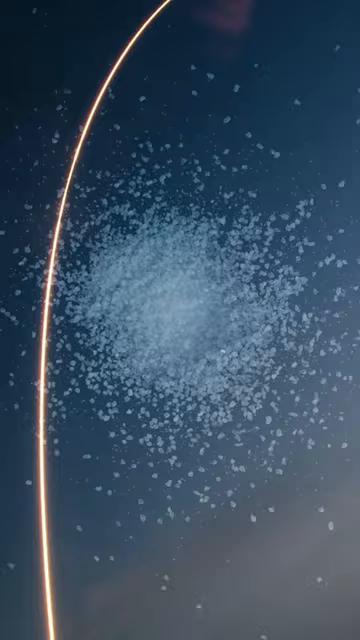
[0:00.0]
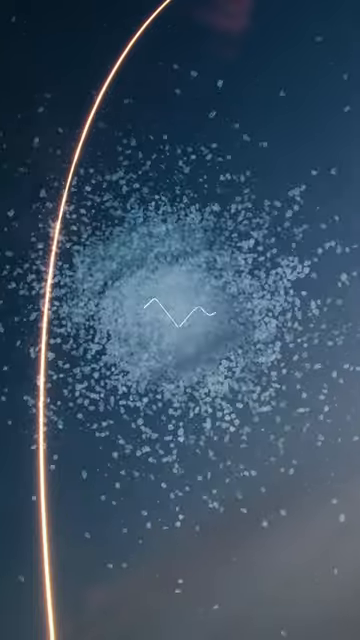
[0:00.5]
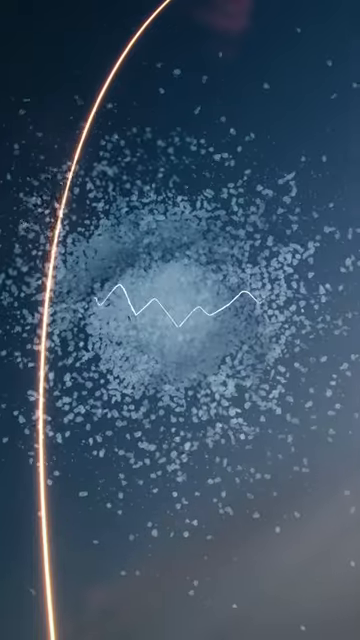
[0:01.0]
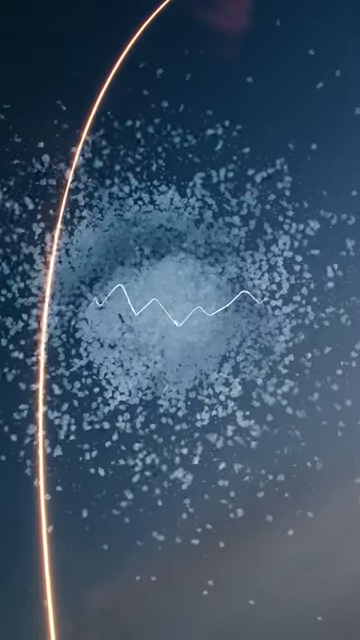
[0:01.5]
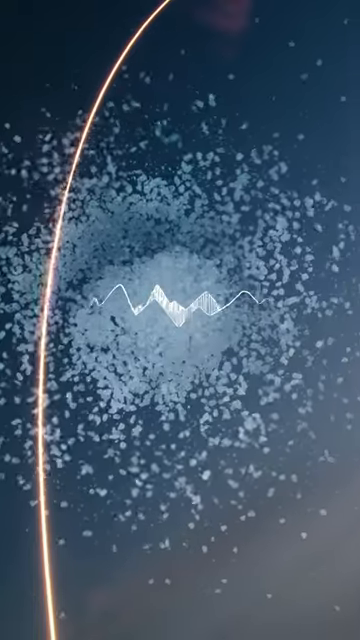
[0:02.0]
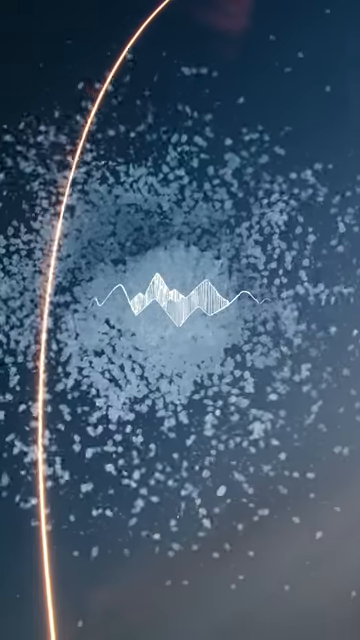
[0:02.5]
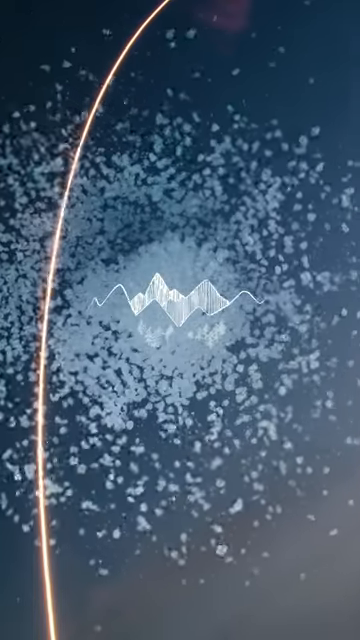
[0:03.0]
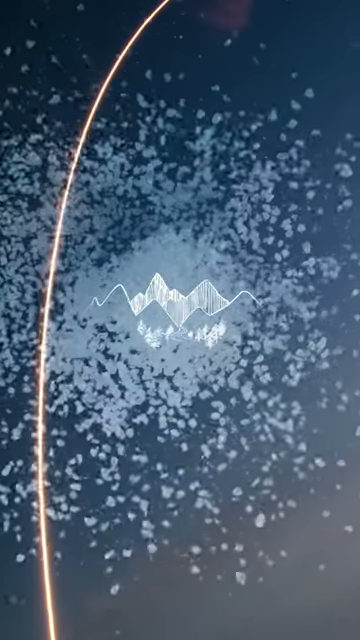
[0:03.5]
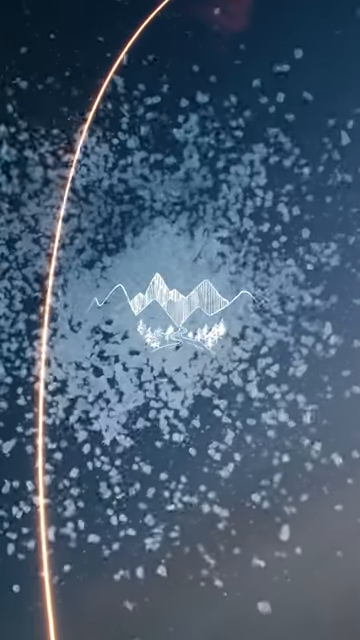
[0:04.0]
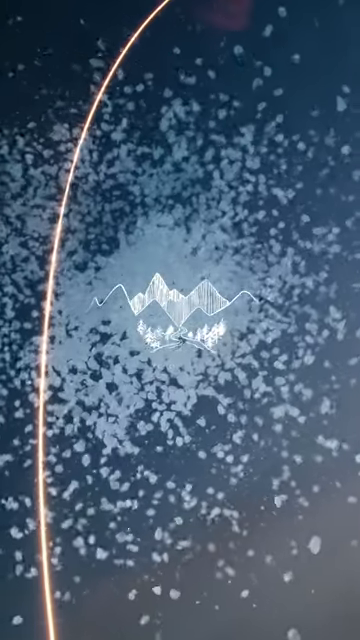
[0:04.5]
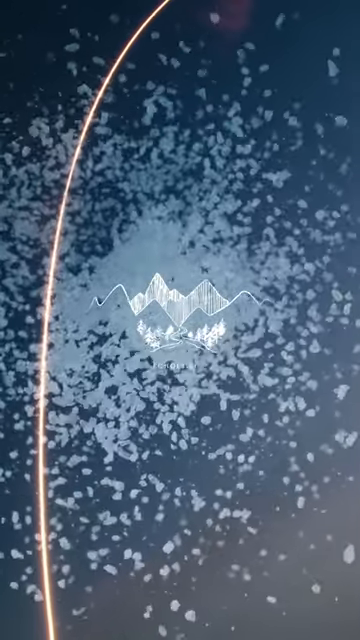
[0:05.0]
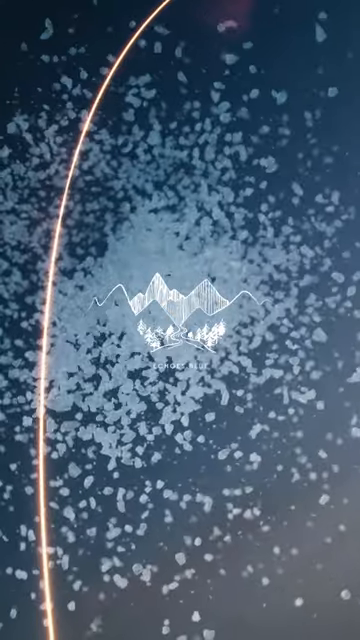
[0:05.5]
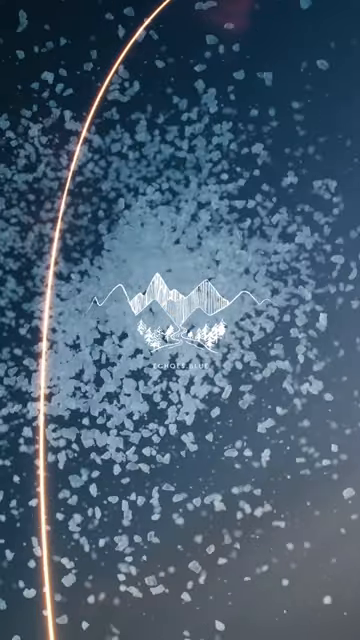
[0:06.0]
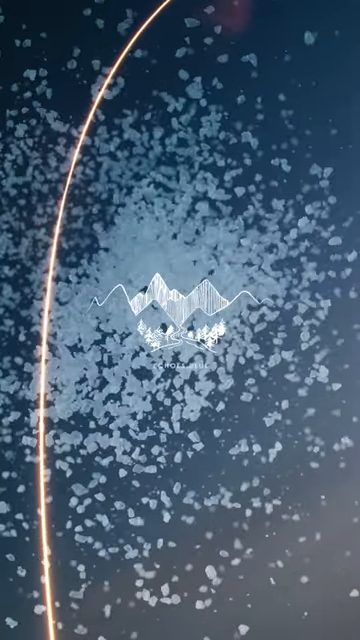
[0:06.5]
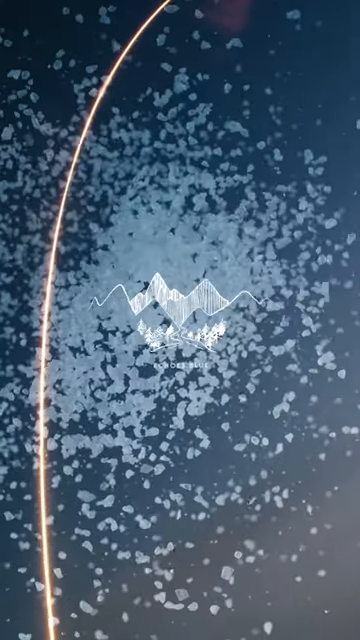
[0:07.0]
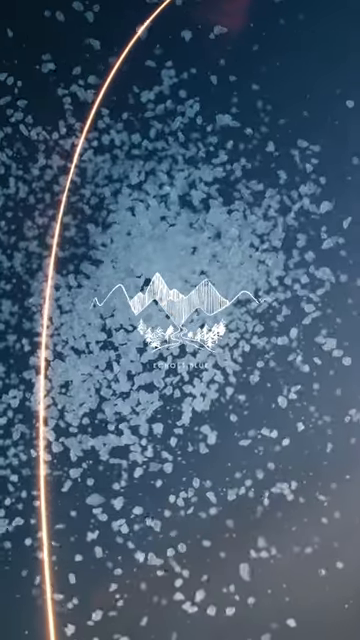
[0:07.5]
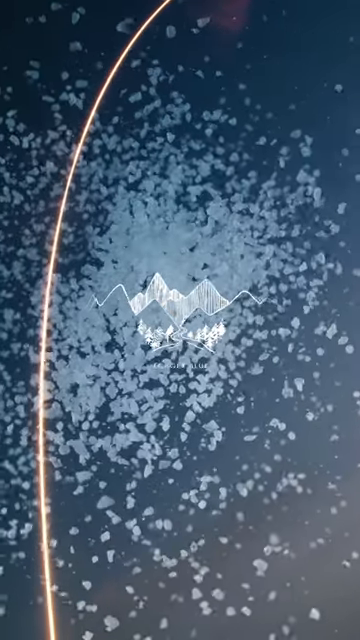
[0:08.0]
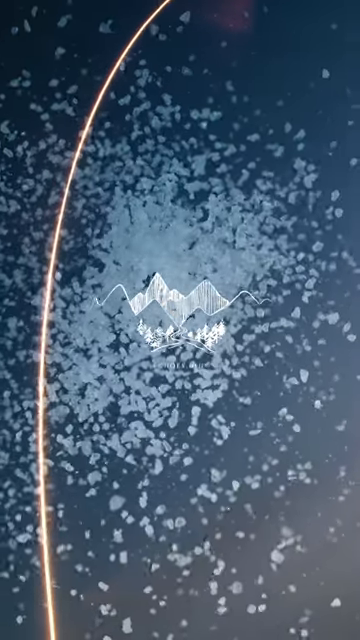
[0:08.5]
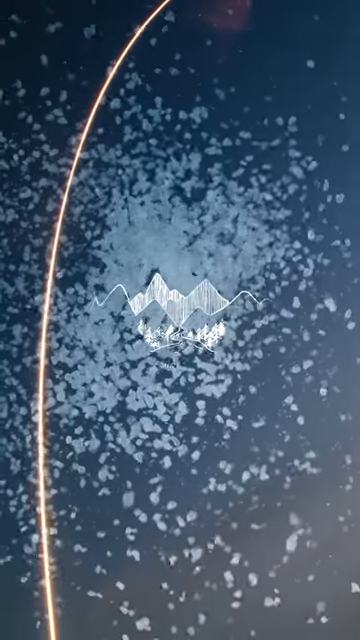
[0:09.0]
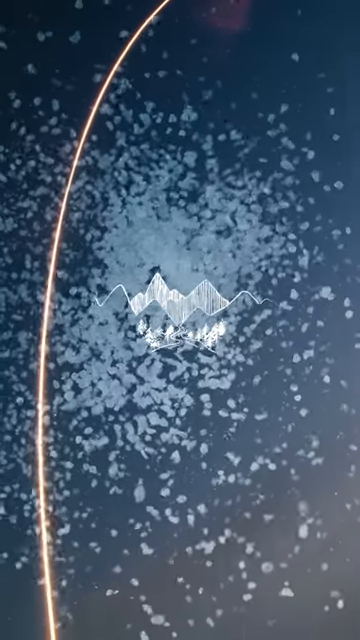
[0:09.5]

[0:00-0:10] A cartoon graphic with a blue background appears. White particles that look almost like confetti start off in the very center of the screen, and a very bright neon beam runs from the bottom of the screen to the top, almost like a comet. The white particles start to separate, and a cartoon drawing appears of what seems to be mountains or hills and valleys, along with what is possibly a road drawn with trees on either end, possibly depicting a destination in the mountains or a valley.